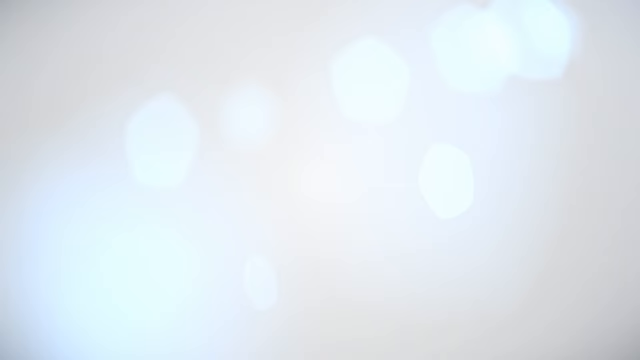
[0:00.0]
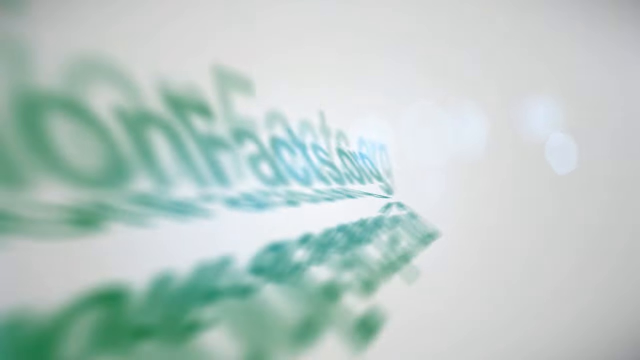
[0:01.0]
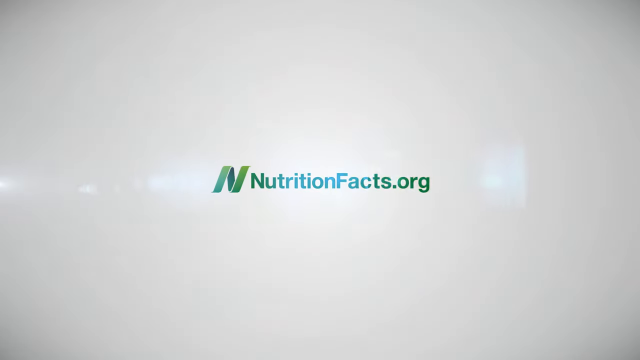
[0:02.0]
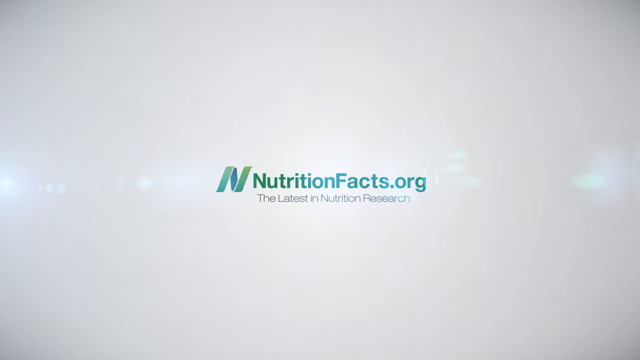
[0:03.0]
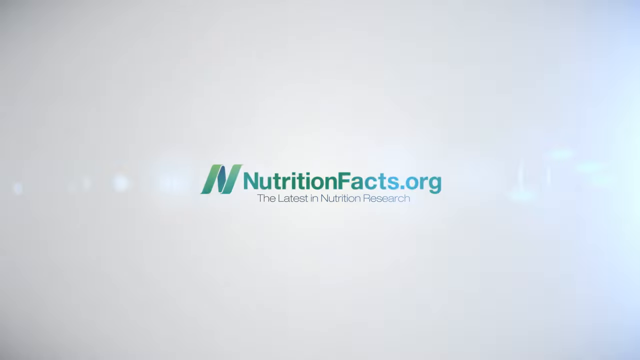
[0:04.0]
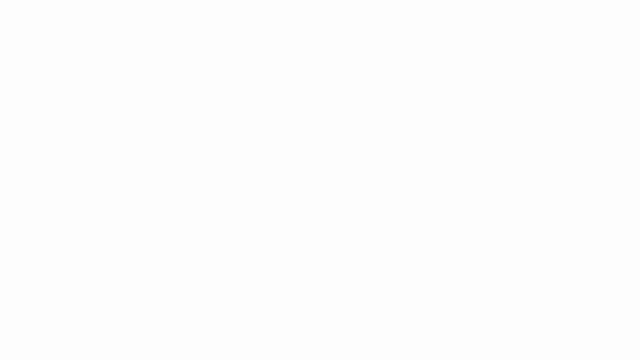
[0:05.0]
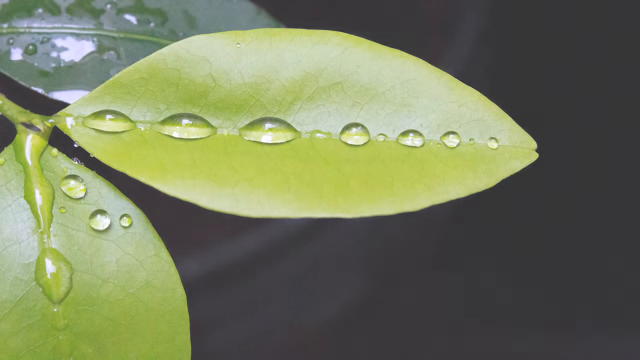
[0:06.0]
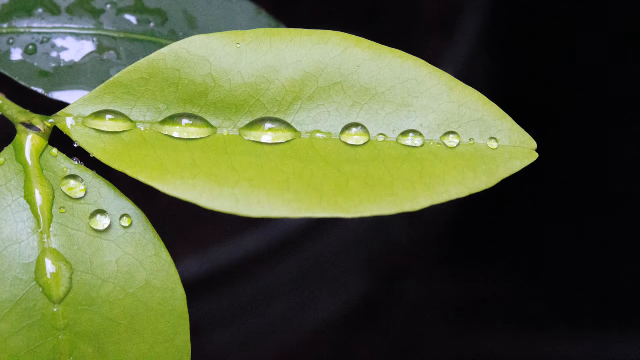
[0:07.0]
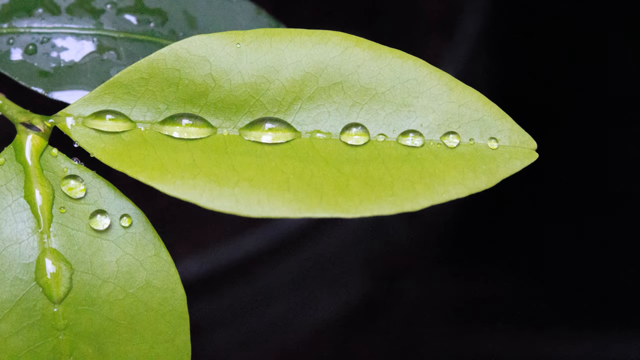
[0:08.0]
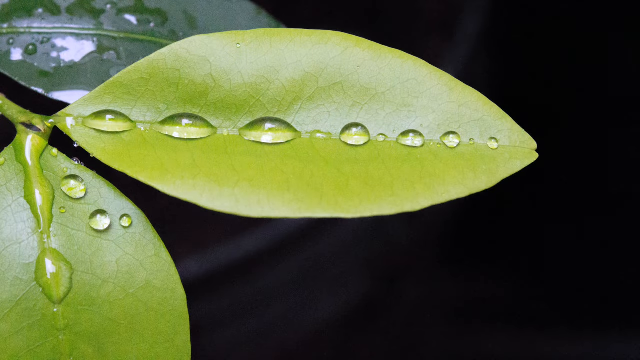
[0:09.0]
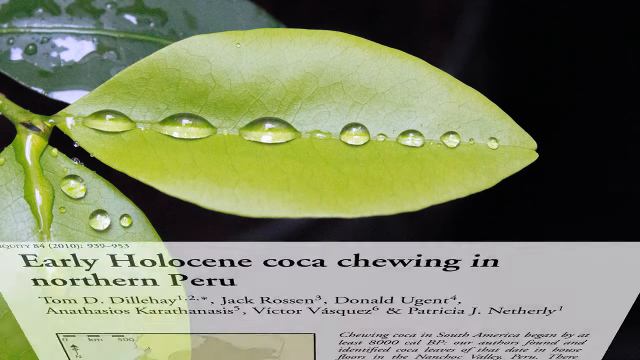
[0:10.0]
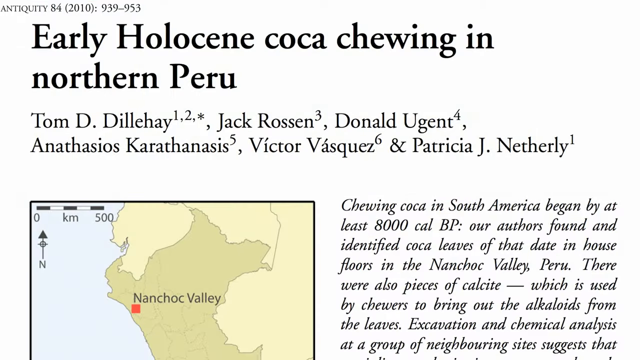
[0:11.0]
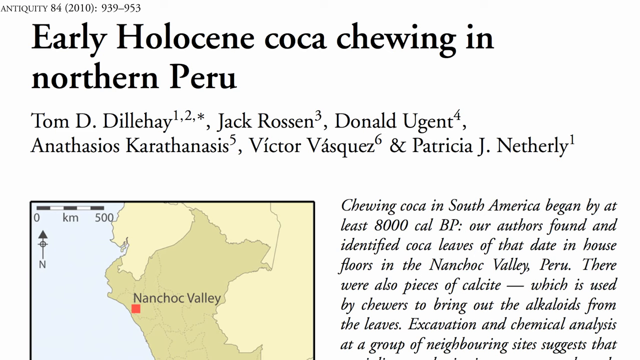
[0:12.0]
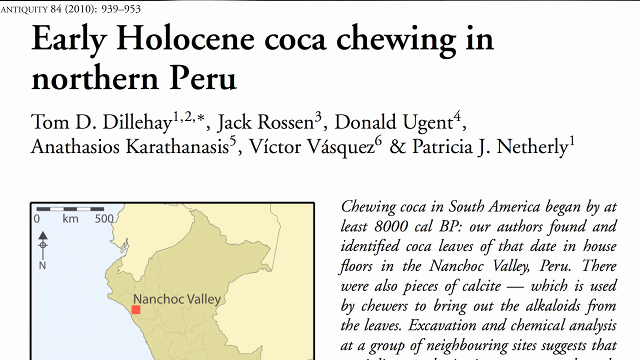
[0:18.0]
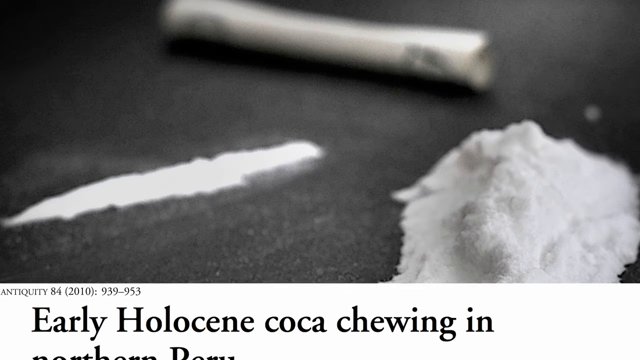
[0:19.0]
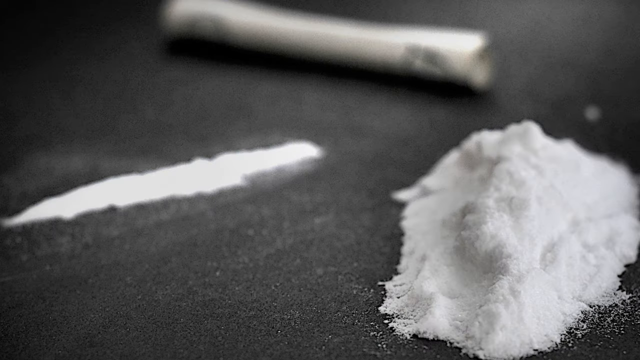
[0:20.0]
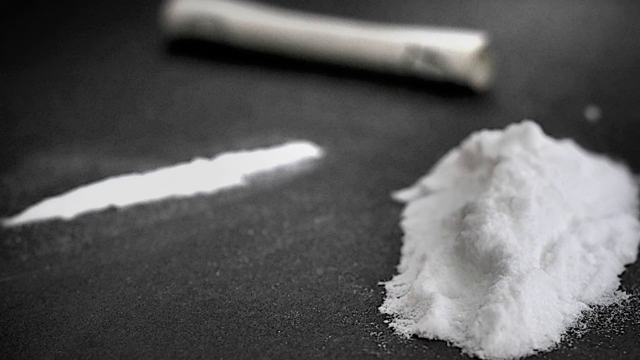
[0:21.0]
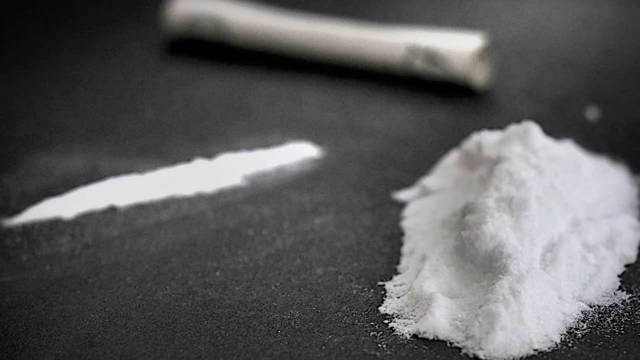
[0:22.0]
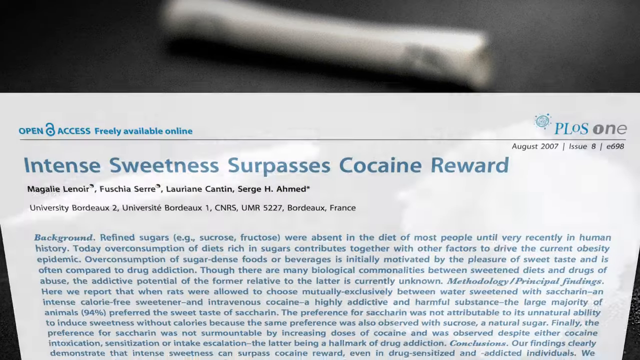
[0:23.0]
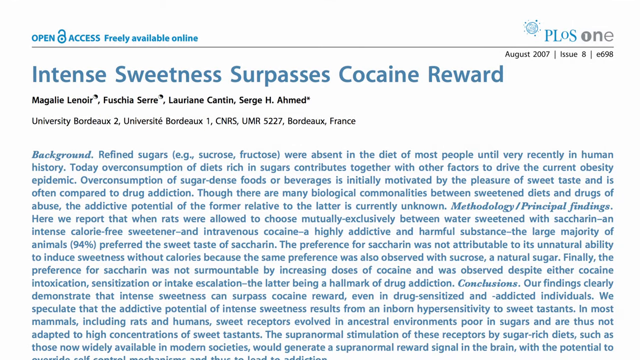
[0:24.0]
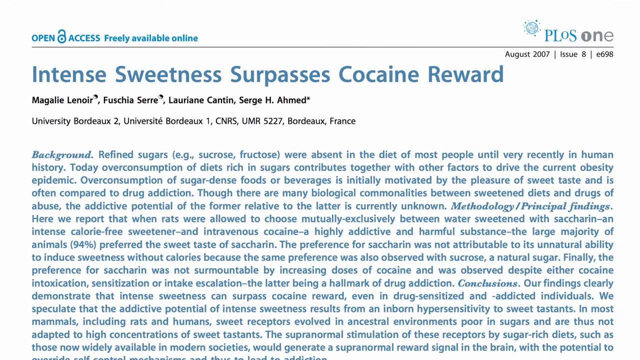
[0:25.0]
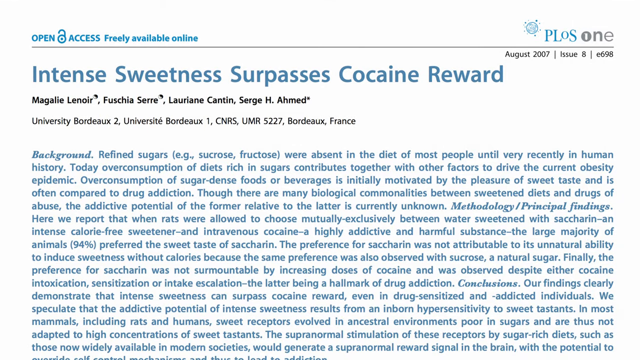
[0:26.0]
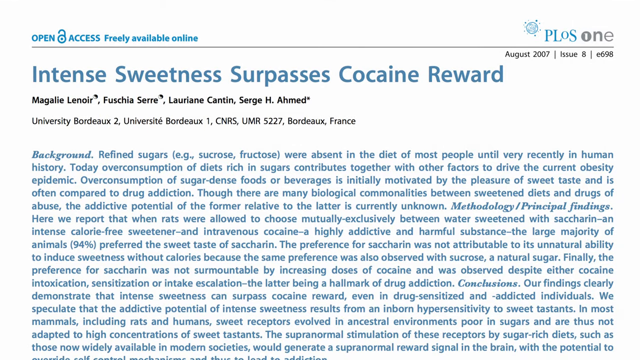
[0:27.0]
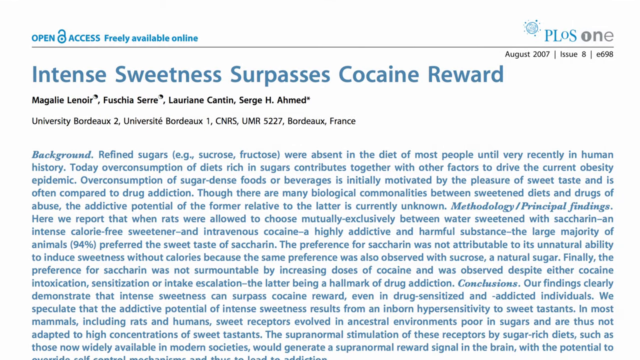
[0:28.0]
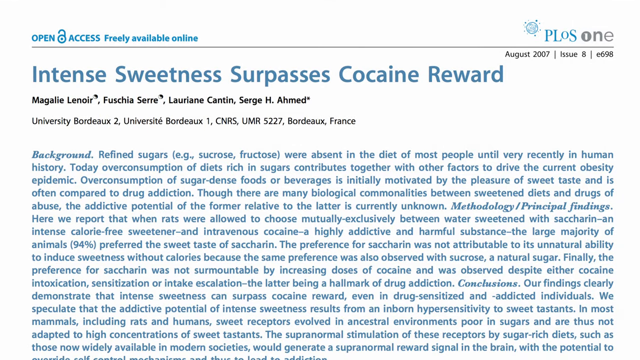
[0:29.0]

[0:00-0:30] The frame is a little wider than it is tall, with a gray background. In the center is a color-changing logo that fades from teal into a yellow-green, then into a dark blue, then back to teal and yellow-green; it is basically an N that is kind of like a ribbon. To the right of it, text going through a similar color transition reads "NutritionFacts.org", and under it in gray text is "The Latest in Nutrition Research". This fades out, and the video fades in on three leaves, one pointing down and two pointing right. The center leaf is in front of the second leaf, which is in the upper left. The front two leaves are a yellow-green and the back one is dark green, and all of them have water droplets on them. The background is totally black. Next comes a slide titled in black text "Early Holocene Cocoa Chewing in Northern Peru", with a map in the lower left and a paragraph partially down in the lower right. It then changes to a blurry black-and-white photo with a pile of white powder in the lower right, followed by a different article titled "Intense Sweetness Surpasses Cocaine Reward".